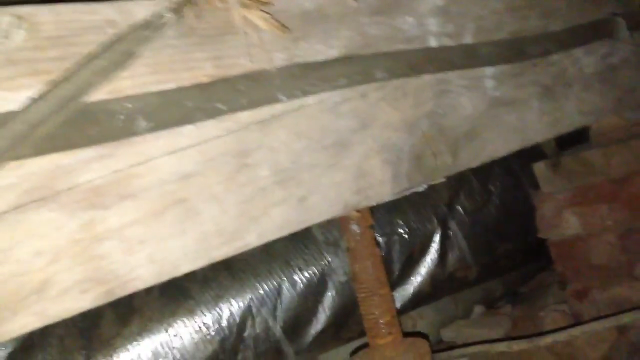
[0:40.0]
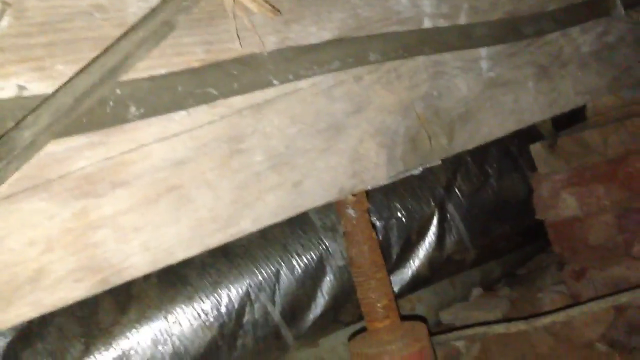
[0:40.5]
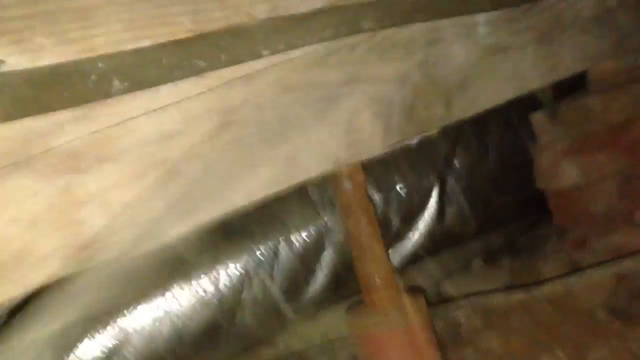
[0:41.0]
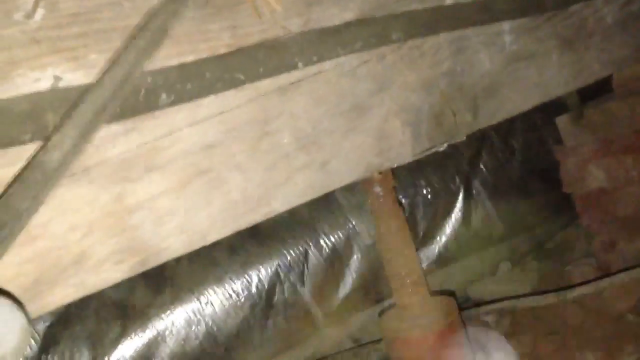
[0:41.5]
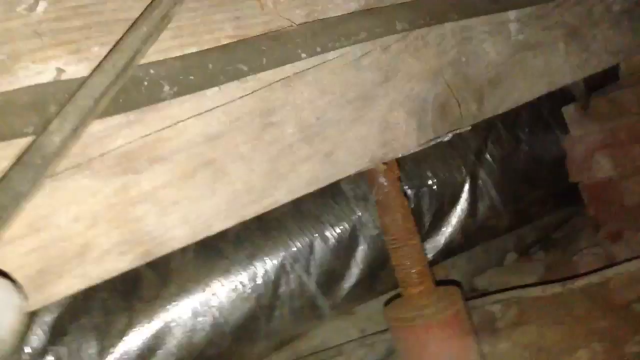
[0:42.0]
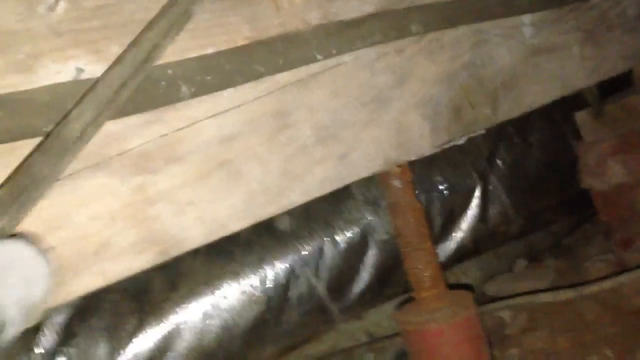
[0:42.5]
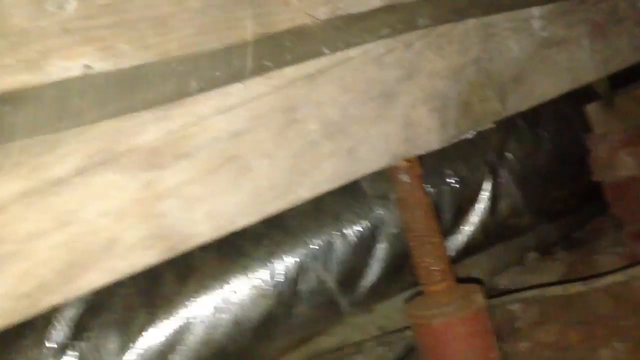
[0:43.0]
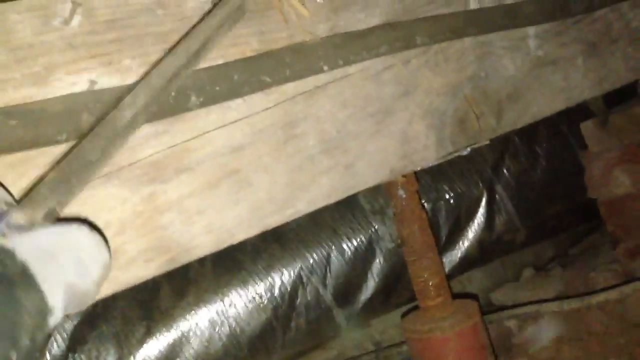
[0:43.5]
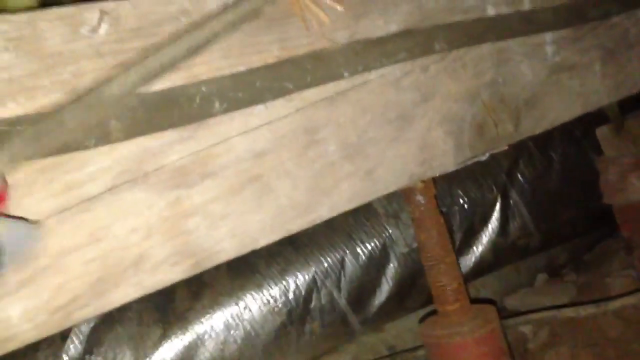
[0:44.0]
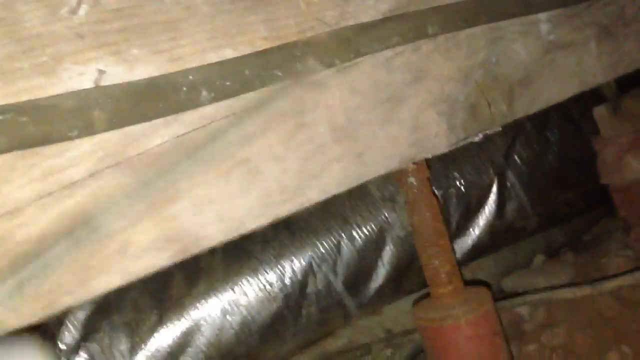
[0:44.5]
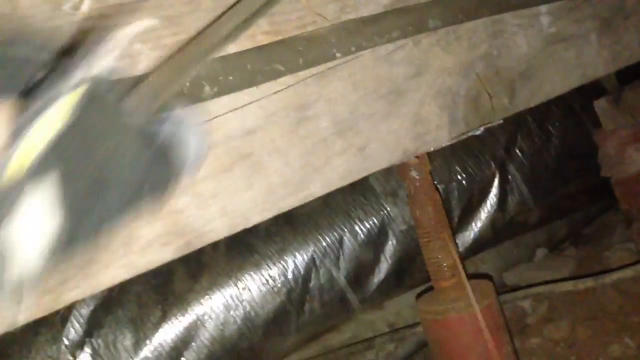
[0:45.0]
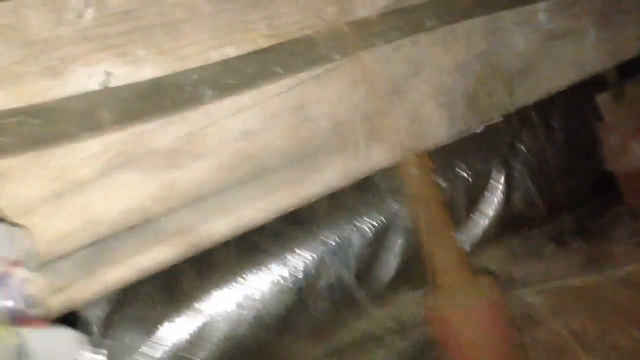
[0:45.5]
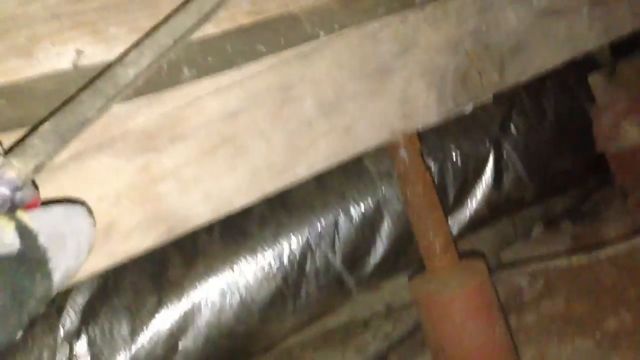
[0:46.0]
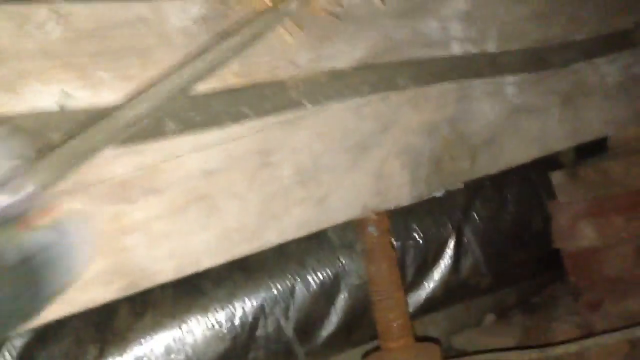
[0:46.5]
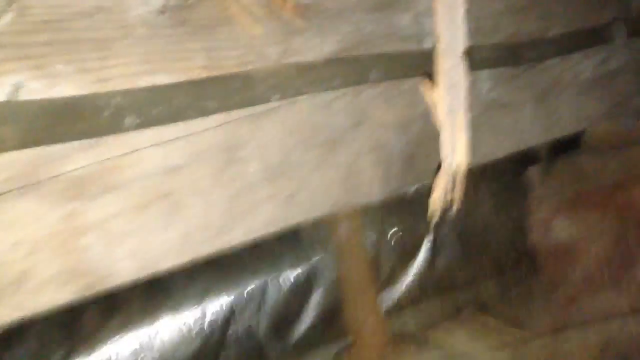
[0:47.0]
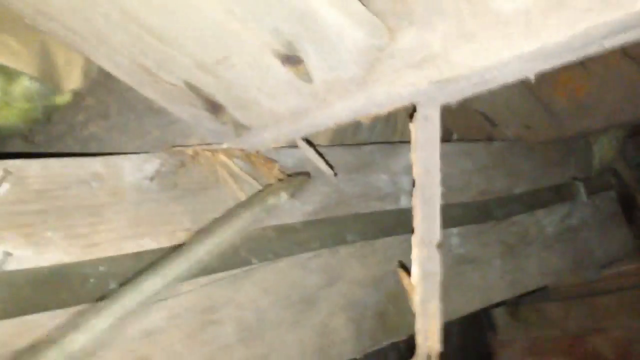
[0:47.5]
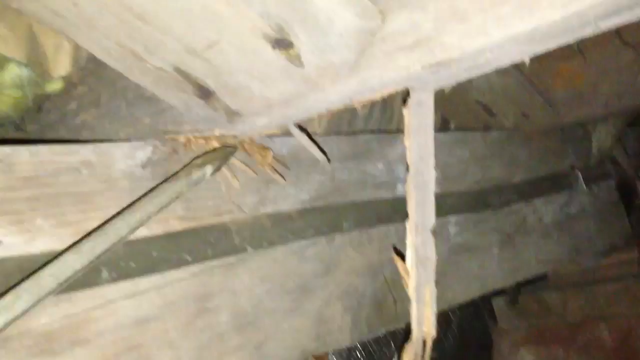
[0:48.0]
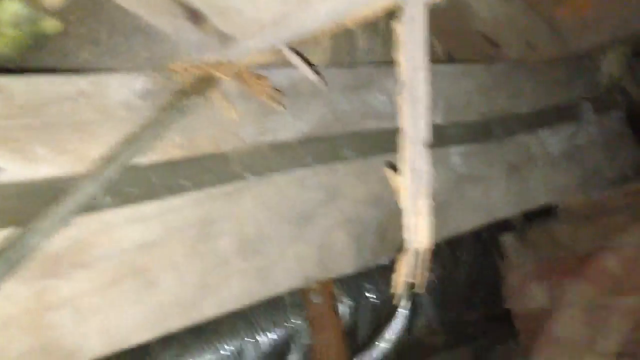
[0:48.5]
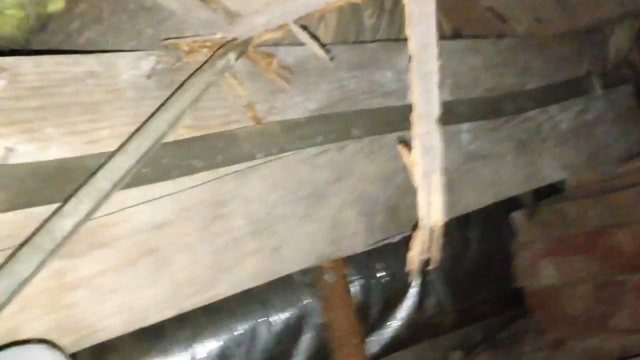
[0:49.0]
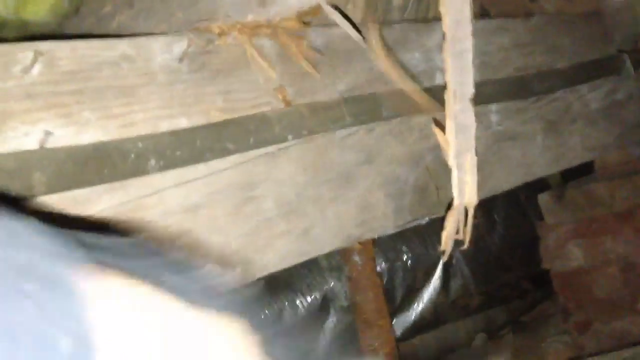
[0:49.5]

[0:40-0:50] From the bottom left corner, a long, kind of old-looking piece of wood angles up to the right, with a thin strip of dark brown above it and more wood across the top. Underneath it in the center, angling down to the right, is the red jack, and behind it is something like the aluminum foil wrap seen around asbestos, with what almost looks like a bit of brickish wall in the bottom right corner. In the top left, from the center angling up to the right, a black crowbar comes in and taps on the wood; a hand shoots over fast to the left and goes back off screen. A little of a thumbnail comes in from the left side. It looks like they are prying and pulling on something. A gray fingerless glove comes in, poking at something and pulling down. Dust falls just above where the jack is. They continue hitting it with the crowbar, and a piece of wood breaks off from the wood going across above; it goes halfway across and points straight down. He digs in with the crowbar some more and flips off more little shavings of wood.